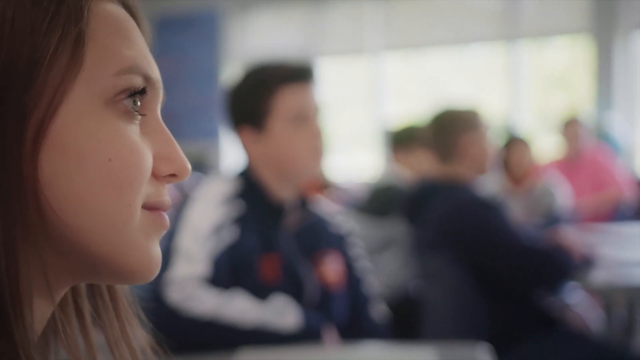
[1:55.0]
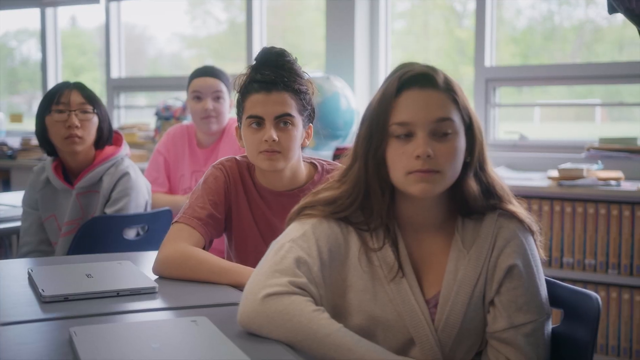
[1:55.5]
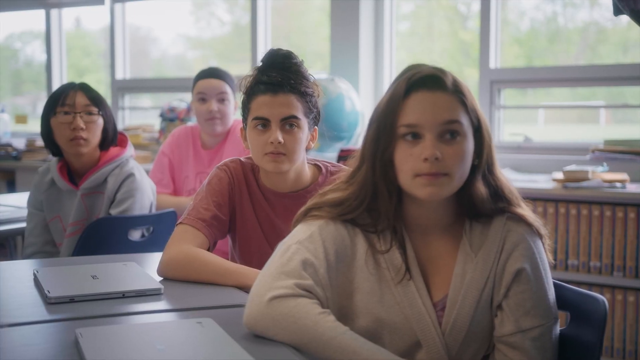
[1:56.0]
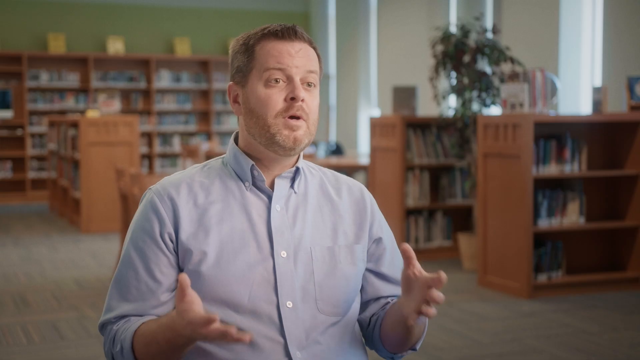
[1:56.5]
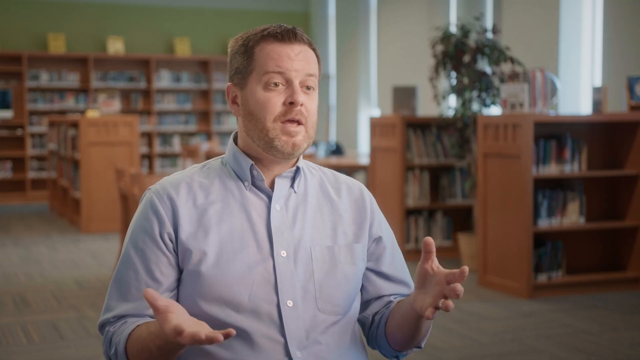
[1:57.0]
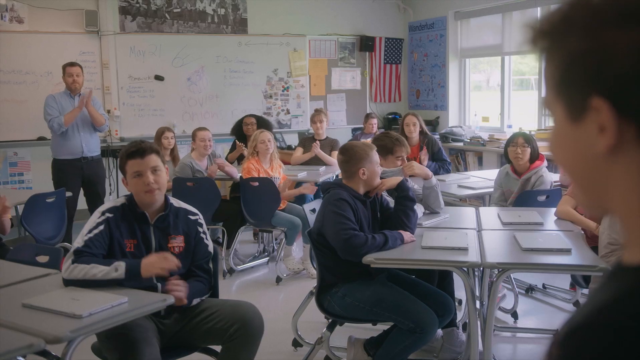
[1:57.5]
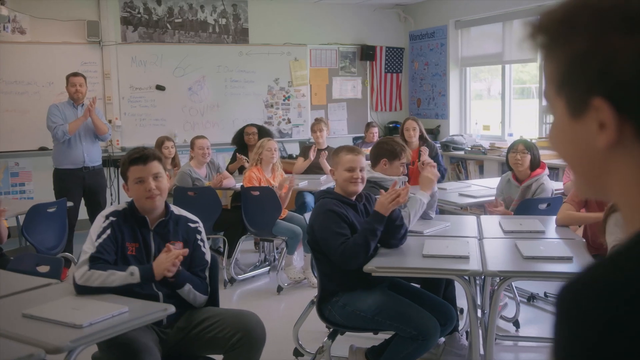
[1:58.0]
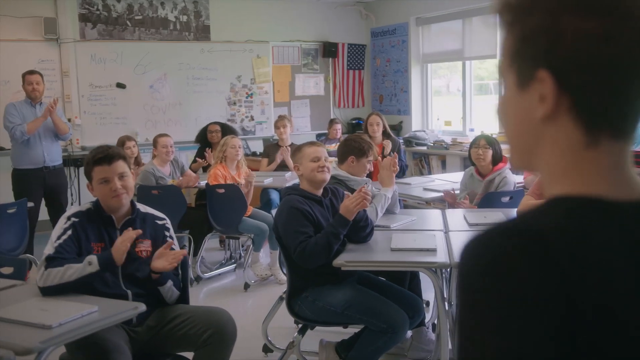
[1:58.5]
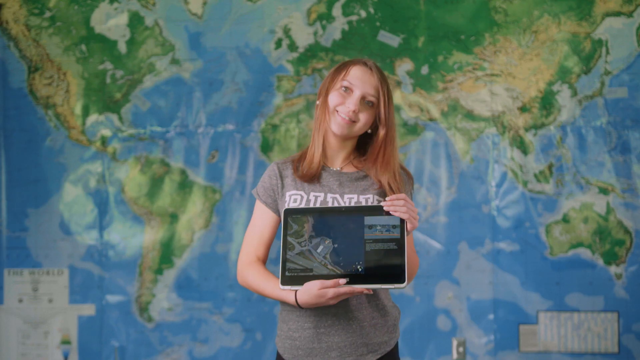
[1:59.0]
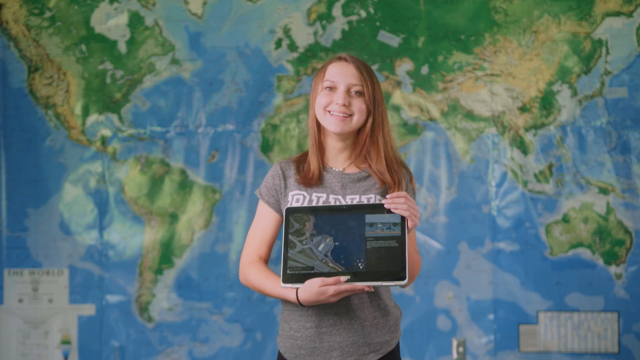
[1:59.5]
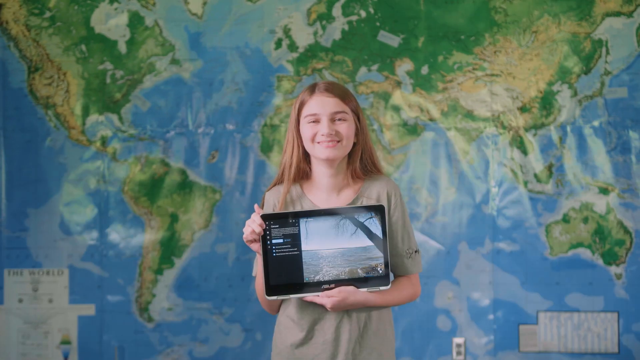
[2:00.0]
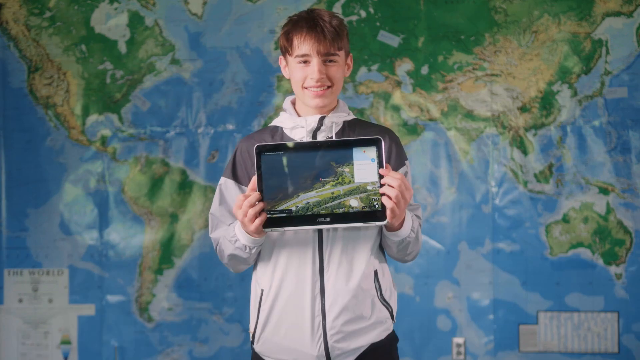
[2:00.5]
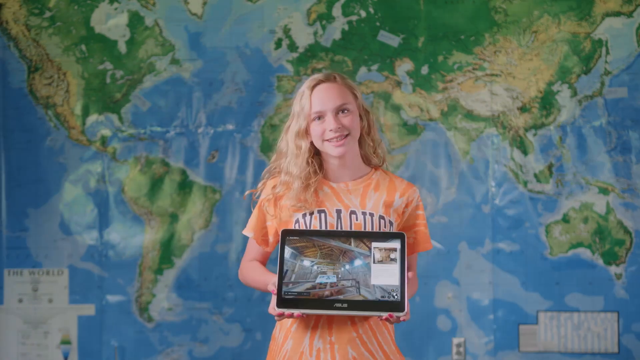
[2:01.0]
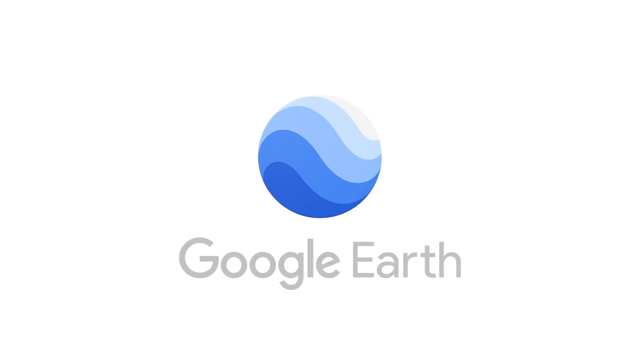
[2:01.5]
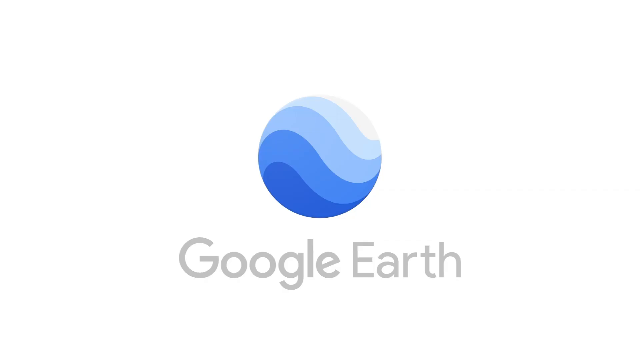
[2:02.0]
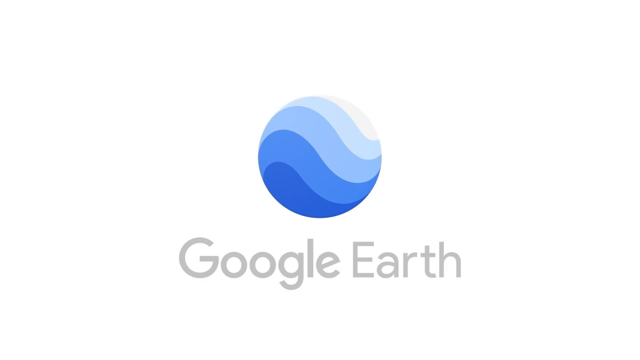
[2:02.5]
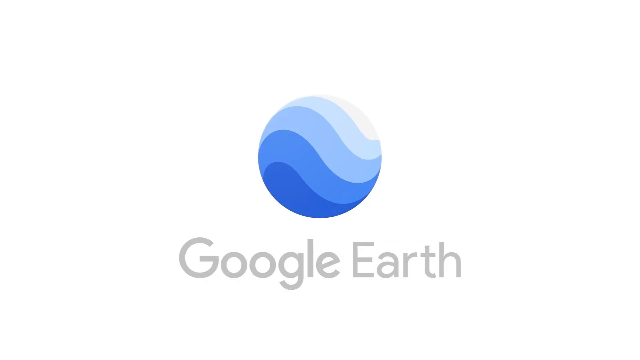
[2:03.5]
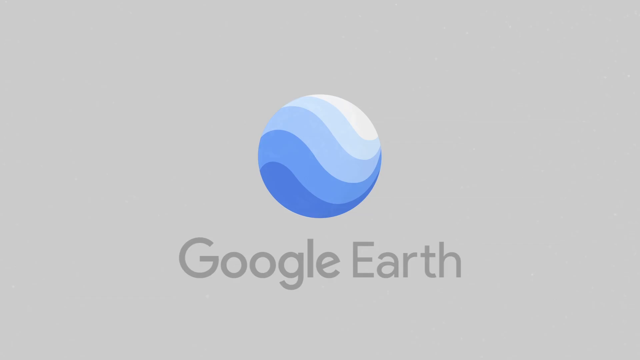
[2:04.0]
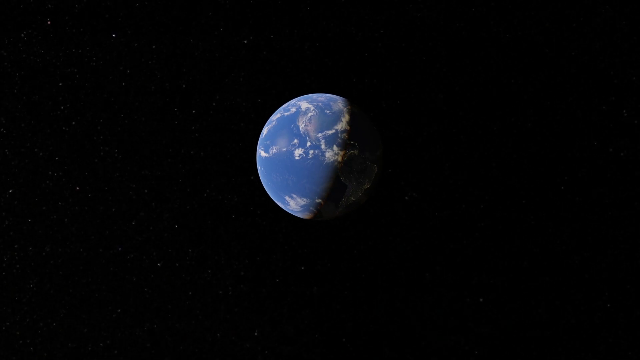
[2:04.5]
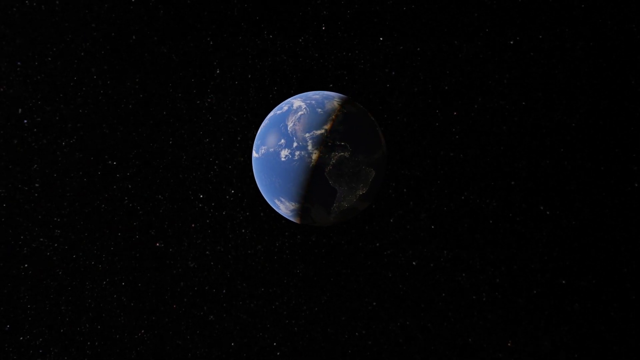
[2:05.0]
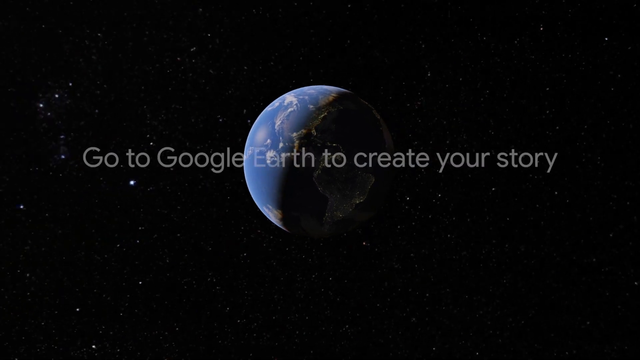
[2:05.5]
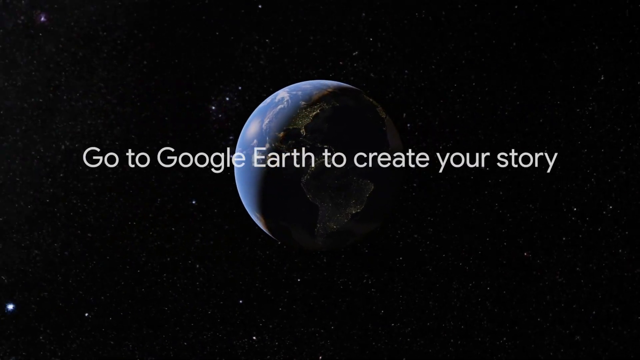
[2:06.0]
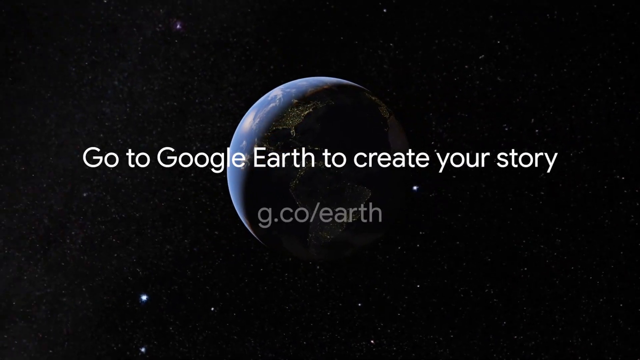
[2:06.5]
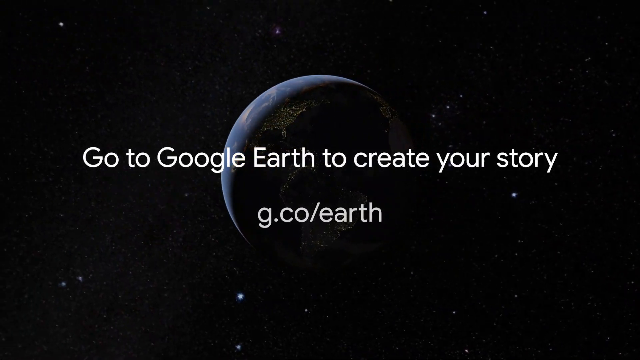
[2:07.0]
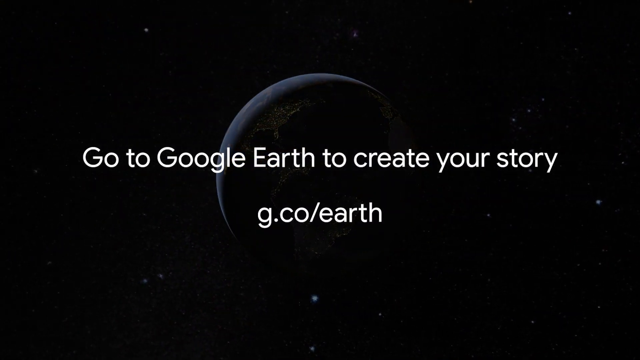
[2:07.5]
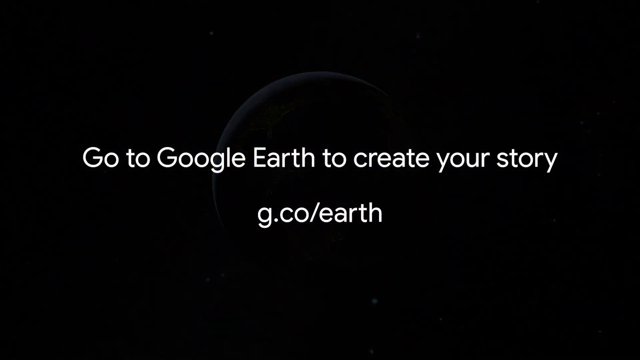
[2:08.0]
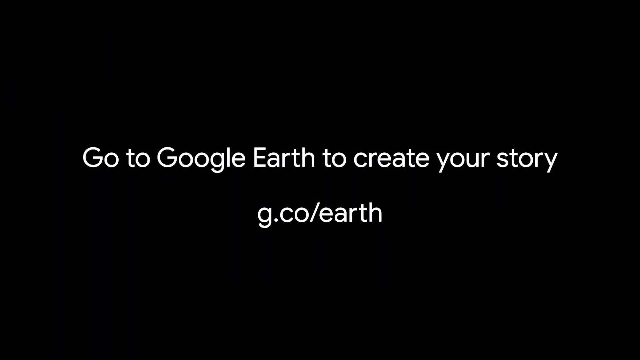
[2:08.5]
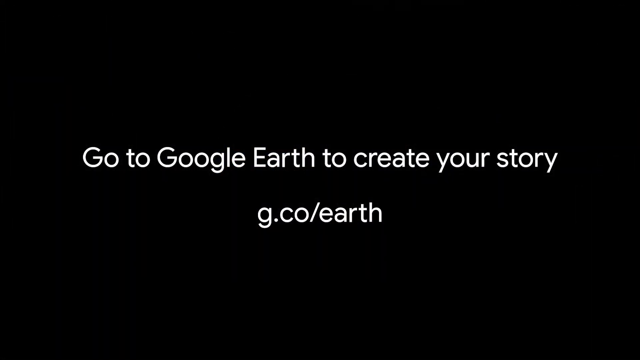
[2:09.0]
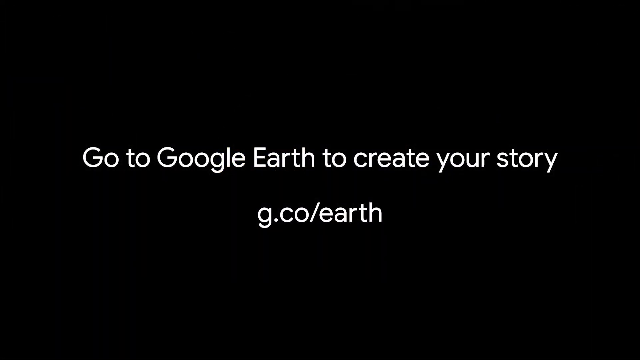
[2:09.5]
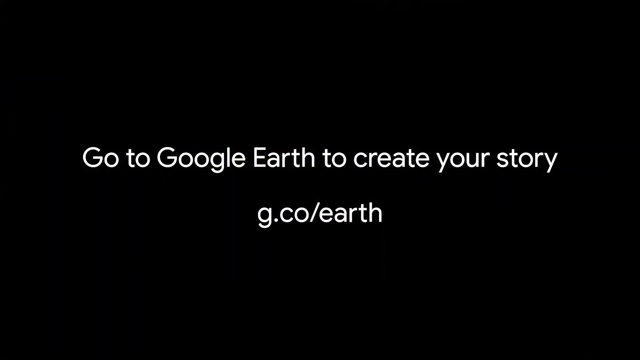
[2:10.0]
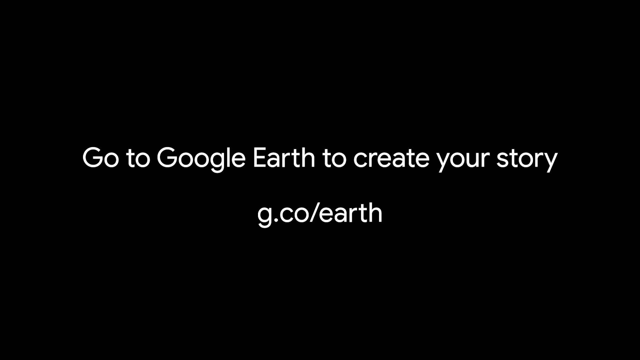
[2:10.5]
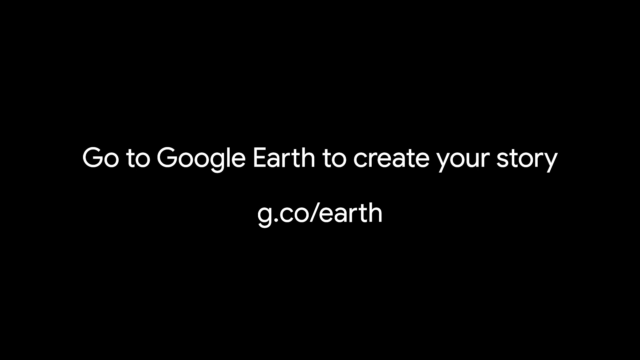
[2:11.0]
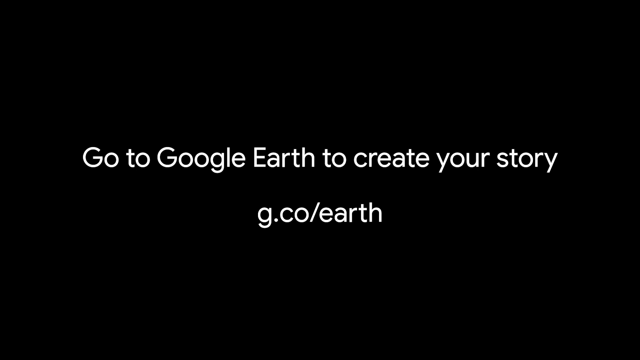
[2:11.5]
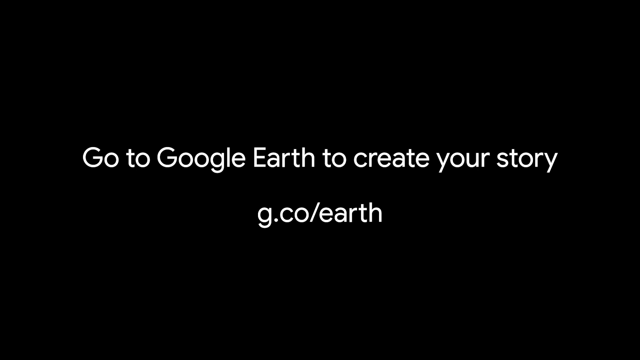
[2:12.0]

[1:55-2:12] The same students in the classroom listen to the student at the front of the room. The teacher is in a separate interview, possibly in a library, and then everyone claps for the young man's presentation. Individual shots show students holding iPads displaying a map that looks similar to the maps seen throughout the video, especially the young presenter's map on the large monitor. There are at least eight different kids. These scenes close with a caricature of the Earth with the words "Google Earth" written below it. Then a globe rotates against a black background with stars and the words "Go to Google Earth to create your story, g.co/earth".